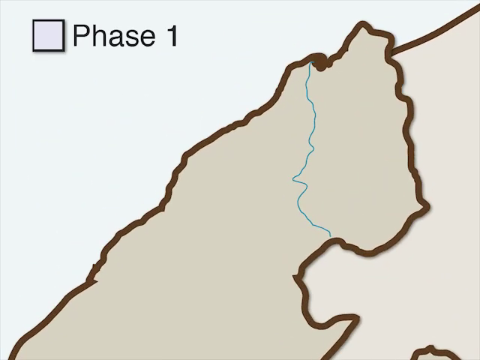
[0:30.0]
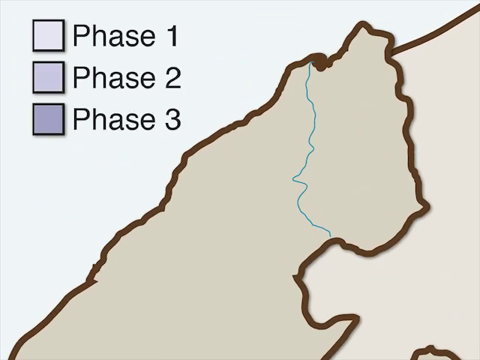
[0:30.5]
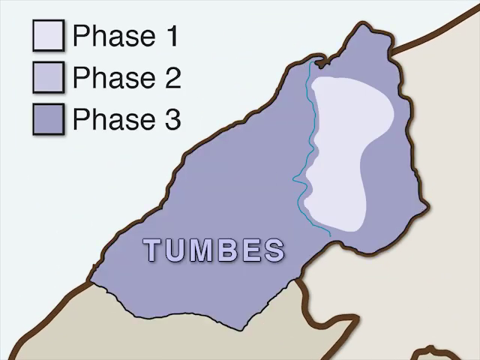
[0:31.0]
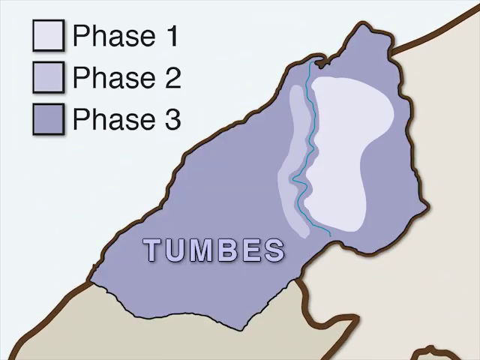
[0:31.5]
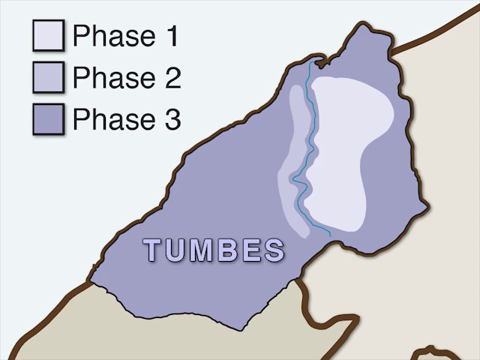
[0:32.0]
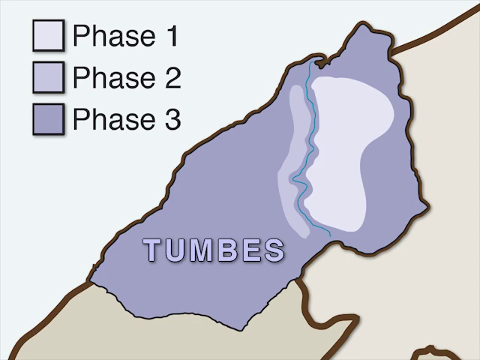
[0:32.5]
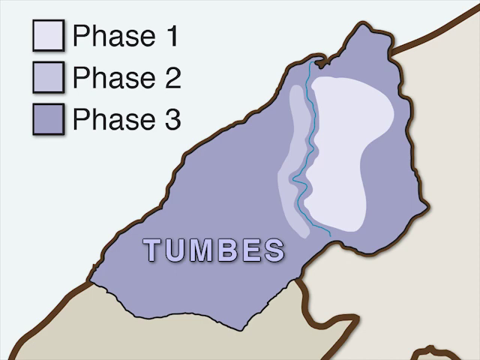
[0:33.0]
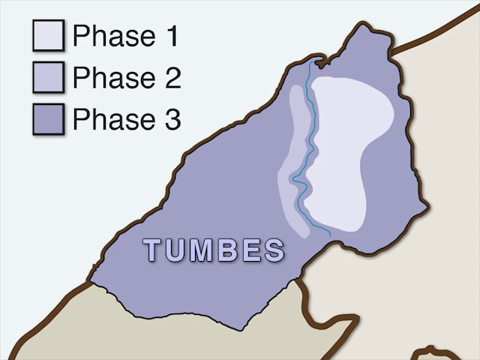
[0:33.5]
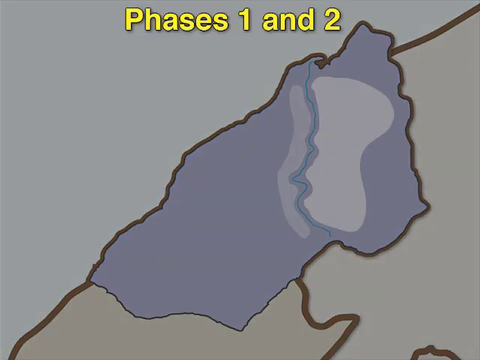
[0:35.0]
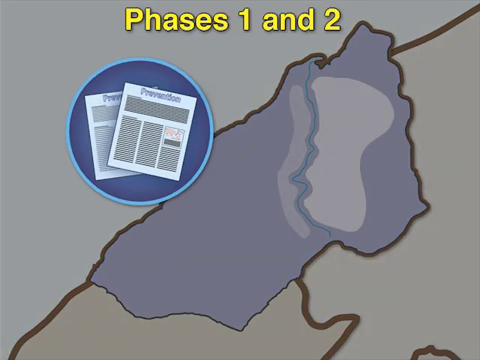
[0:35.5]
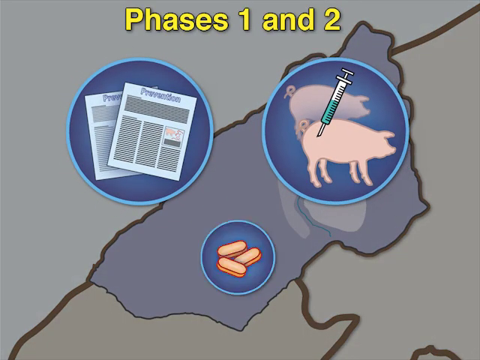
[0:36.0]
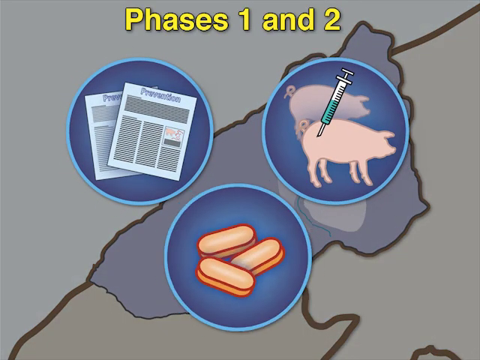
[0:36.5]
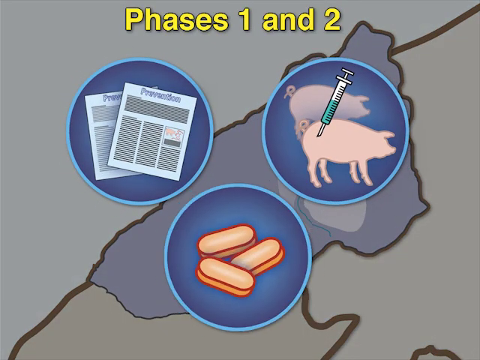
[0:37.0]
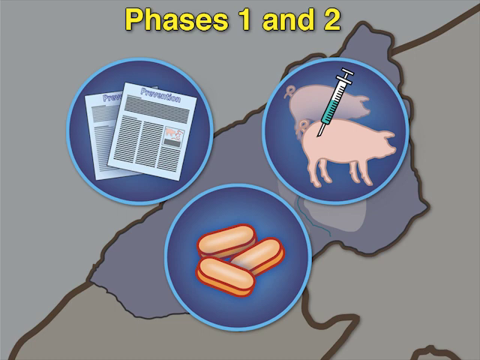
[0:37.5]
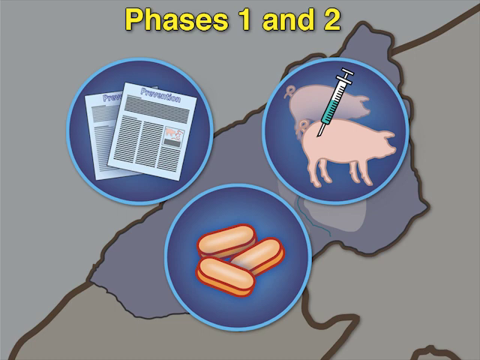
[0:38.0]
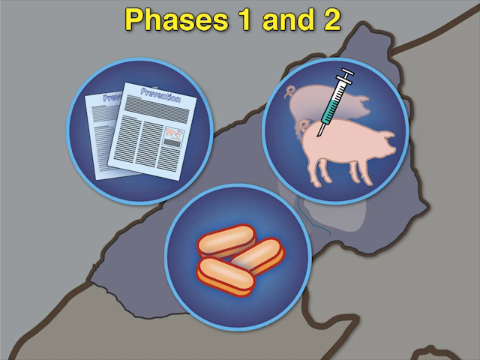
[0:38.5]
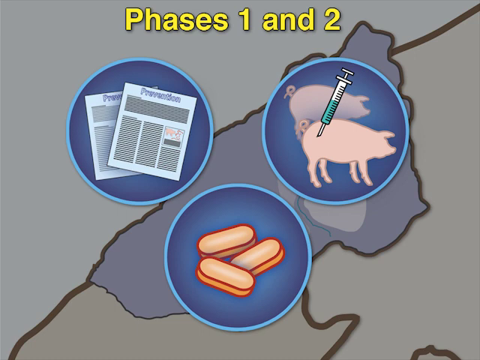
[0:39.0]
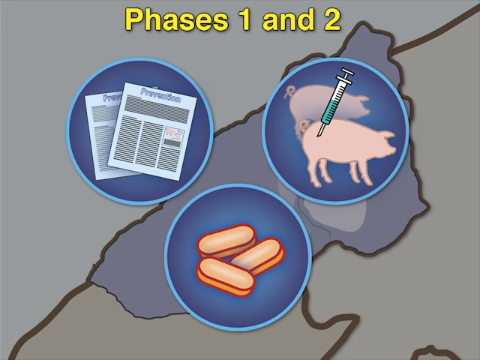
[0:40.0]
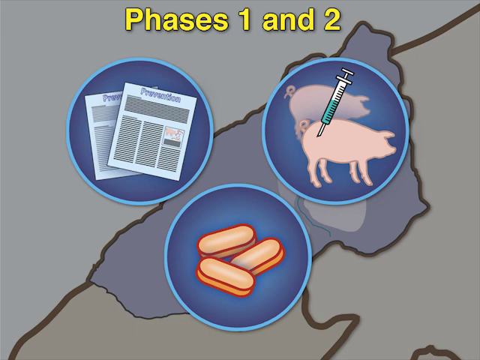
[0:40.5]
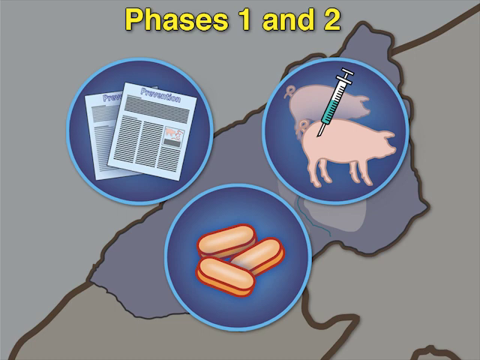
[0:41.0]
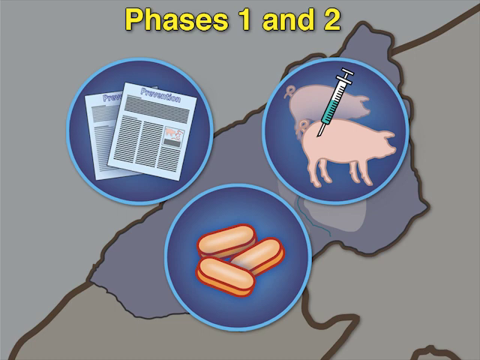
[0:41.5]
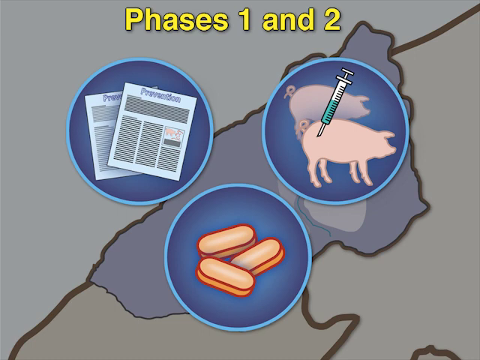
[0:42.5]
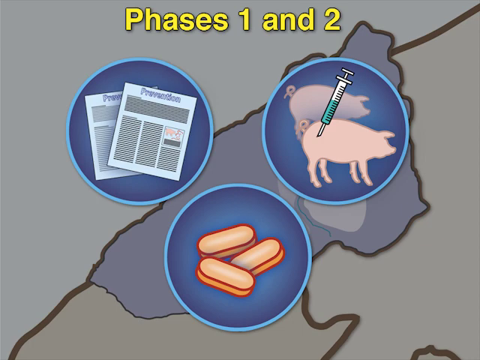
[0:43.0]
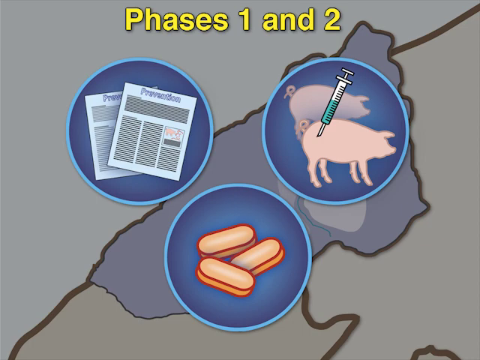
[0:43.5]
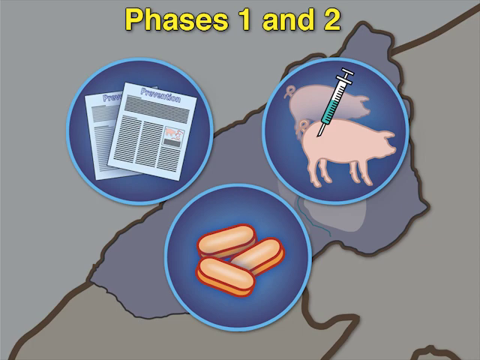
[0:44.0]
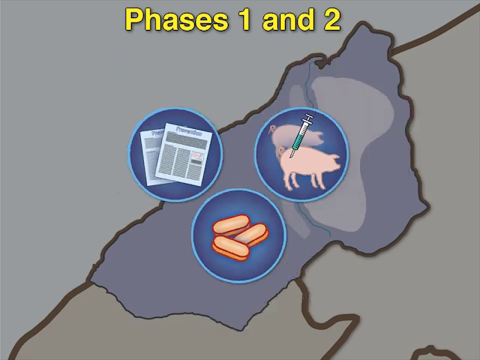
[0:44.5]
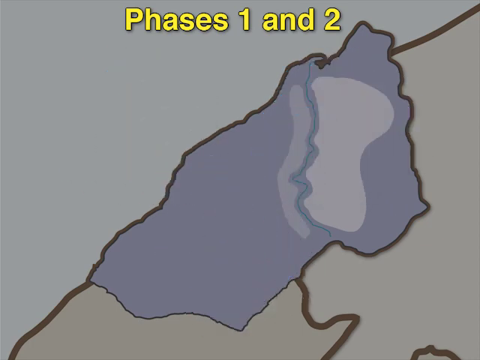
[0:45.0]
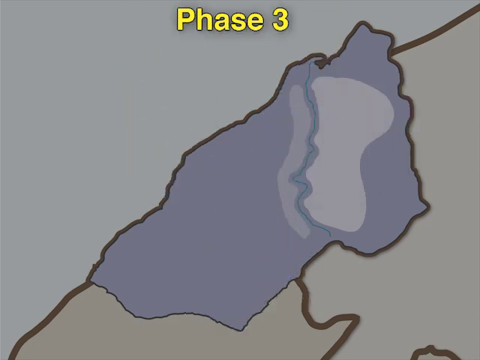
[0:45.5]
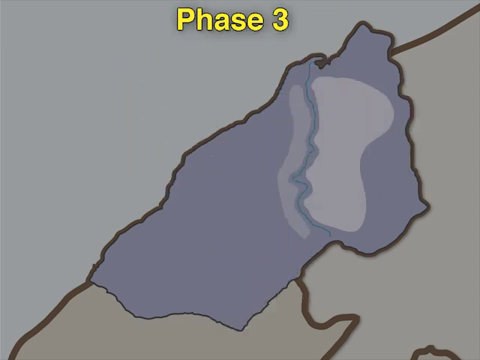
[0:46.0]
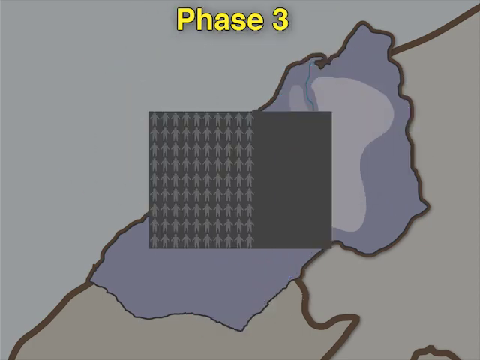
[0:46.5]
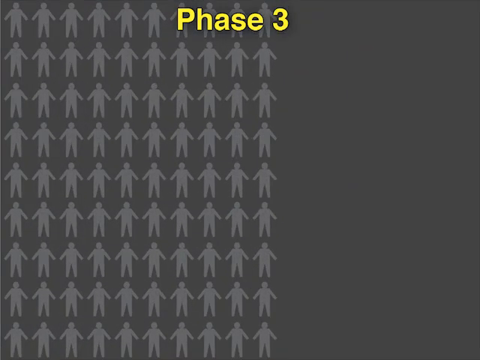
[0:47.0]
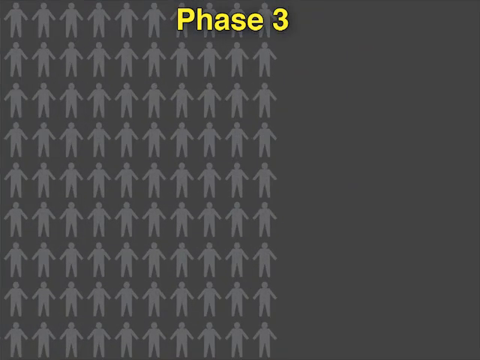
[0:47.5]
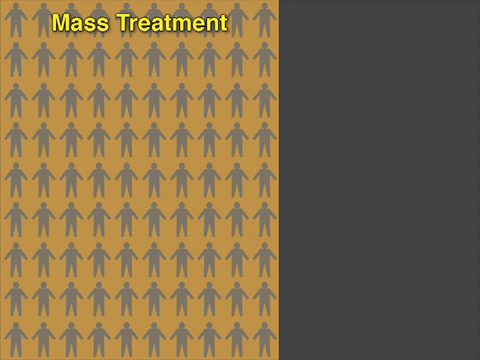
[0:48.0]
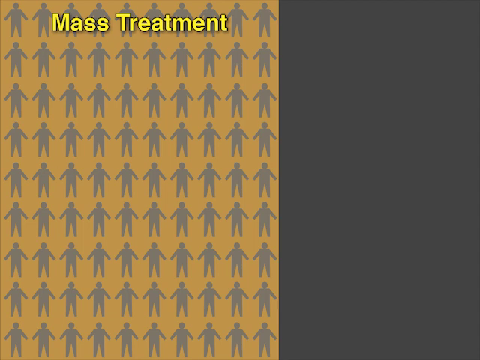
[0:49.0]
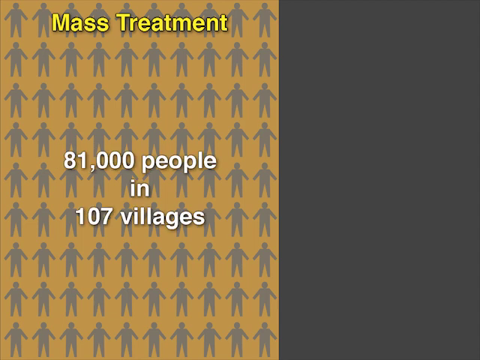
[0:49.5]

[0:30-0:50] Three boxes appear, one filled white, the next a very light blue and the third a darker blue, reading "Phase 1", "Phase 2" and "Phase 3". The word "TUMBERS" is visible on the screen in capital letters, outlined in black and filled in grey. The next screen shows three circles underneath the title "Phases 1 and 2": the first contains two pieces of paper with illegible writing, the second shows two cartoon pigs with a syringe being inserted into one of them, and the third has three pills inside it. The circles then disappear and the title changes to phase three. A yellow title reading "Mass Treatment" appears with multiple stick men in the background, and white lettering reads "81,000 people in 107 villages". There are transitional effects as the slides change, and the cartoons are animated.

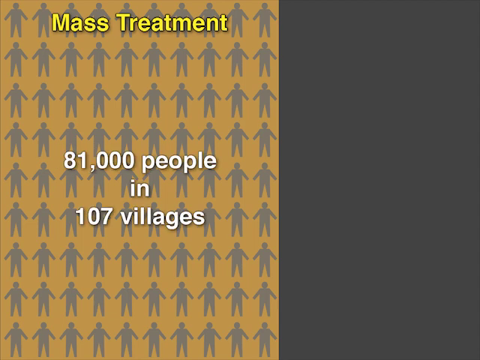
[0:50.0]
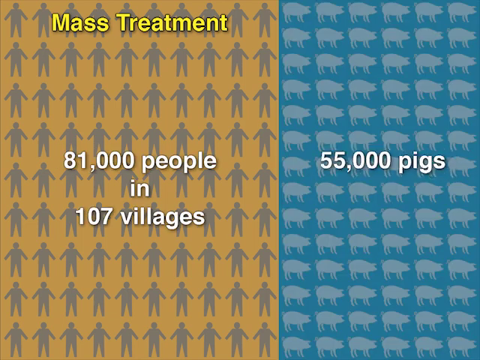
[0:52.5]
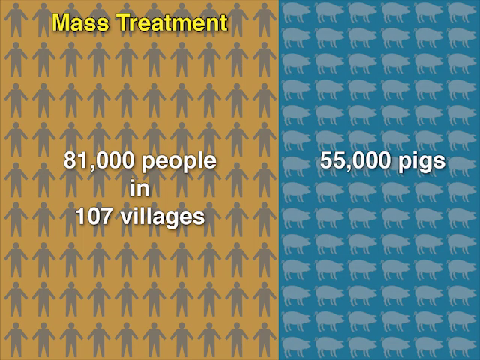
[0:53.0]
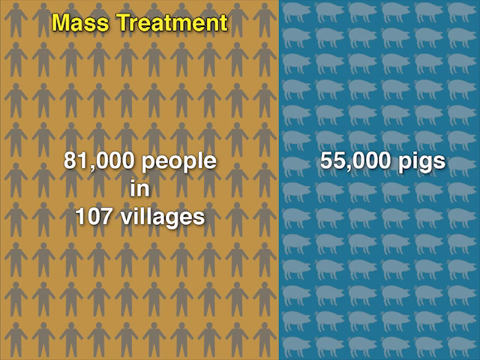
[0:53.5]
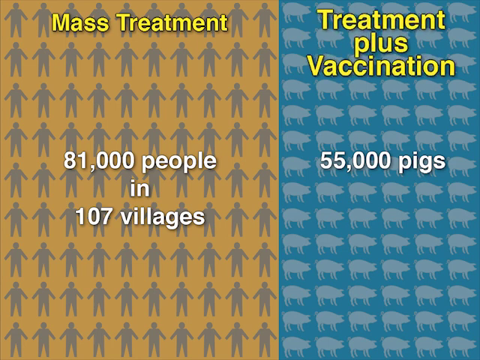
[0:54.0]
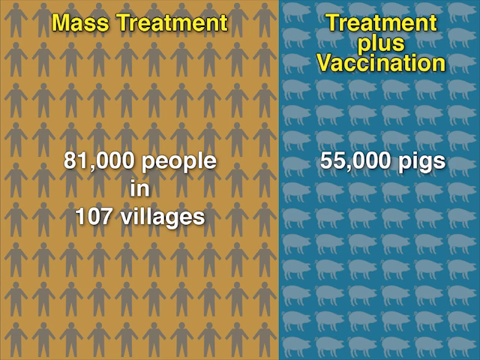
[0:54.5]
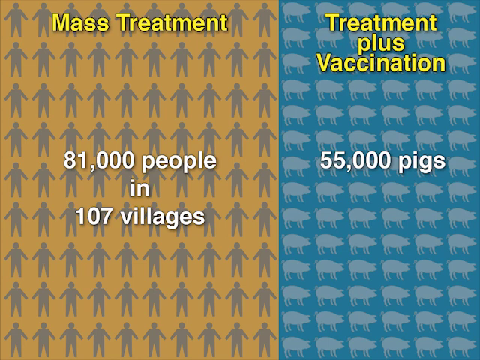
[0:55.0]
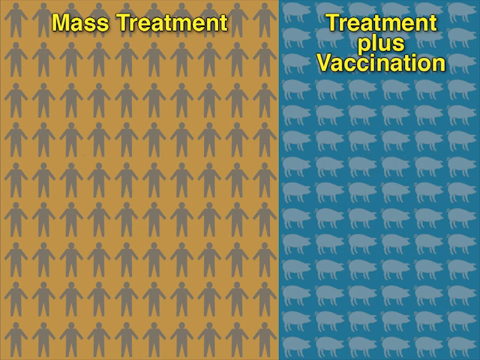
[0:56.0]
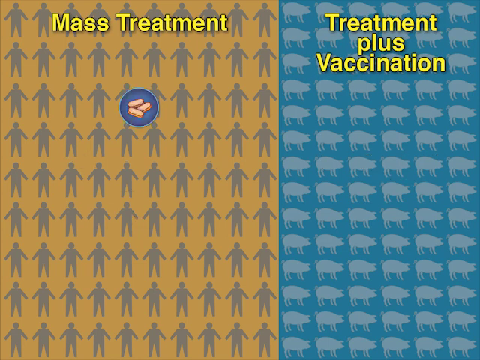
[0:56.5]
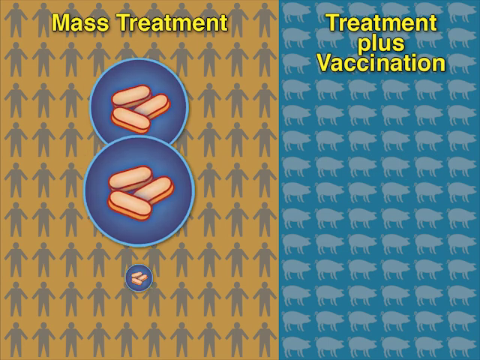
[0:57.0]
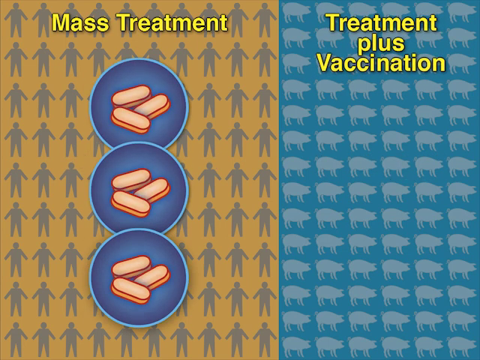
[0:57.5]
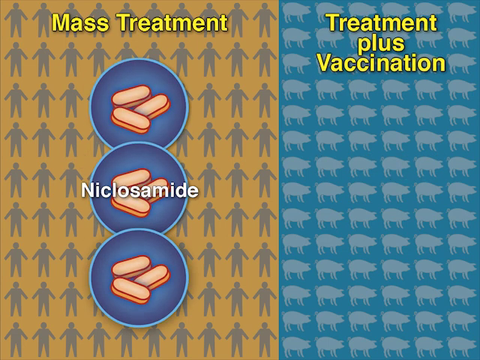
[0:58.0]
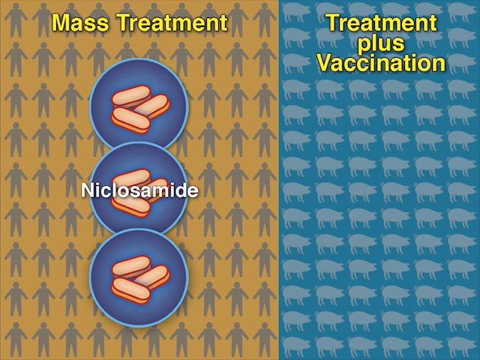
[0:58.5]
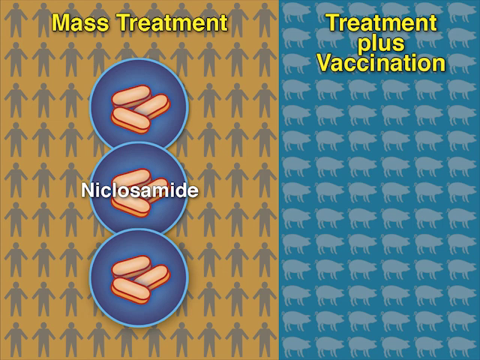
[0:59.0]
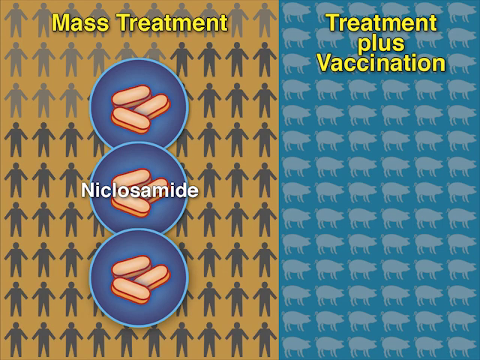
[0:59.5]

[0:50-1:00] The screen reads "mass treatment" in yellow letters, with "81,000 people in 107 villages" underneath in white. On the right of the screen is a background of several pigs filled in blue, with white lettering reading "55,000 pigs", and a yellow title appears reading "treatment plus vaccination". Underneath the mass treatment title on the left, three circles appear with three pills inside each, and the word "NICLOSAMIDE" appears in the central circle. The screen is split in two: the left-hand side shows the Mass Treatment title on a background of many stick men, and the right-hand side shows the Treatment Plus Vaccination title on a background of several pigs.